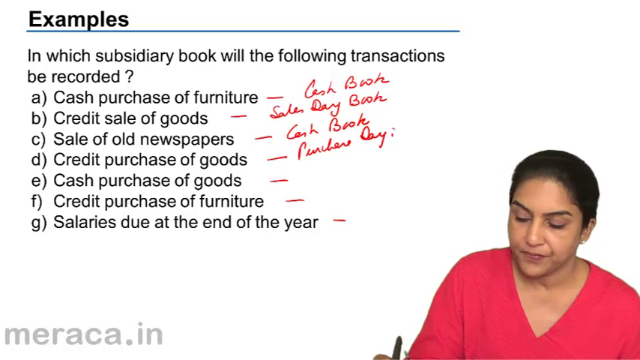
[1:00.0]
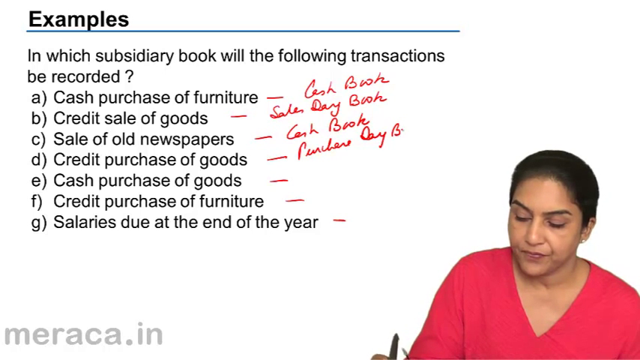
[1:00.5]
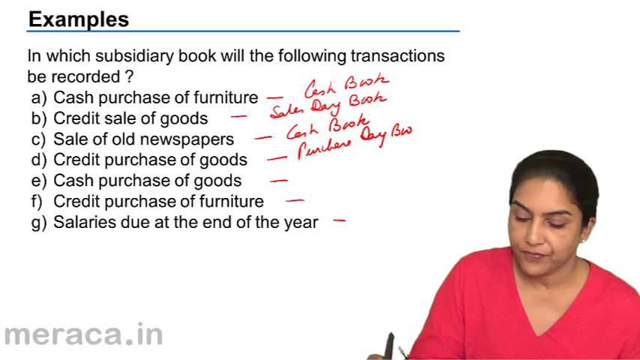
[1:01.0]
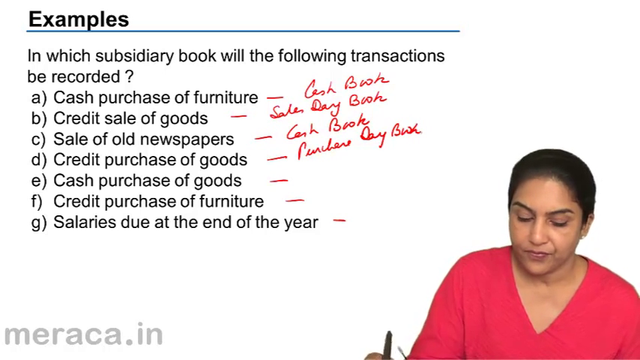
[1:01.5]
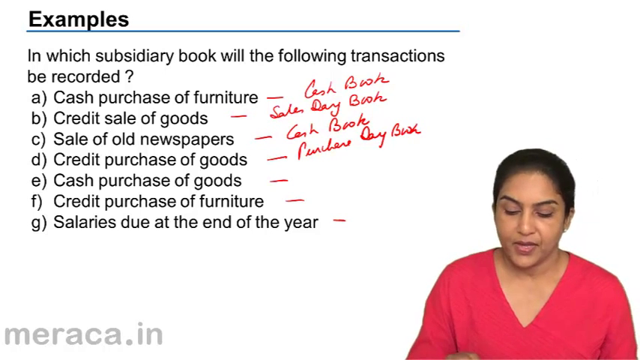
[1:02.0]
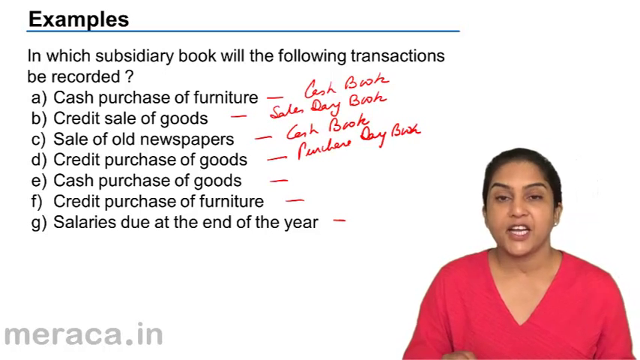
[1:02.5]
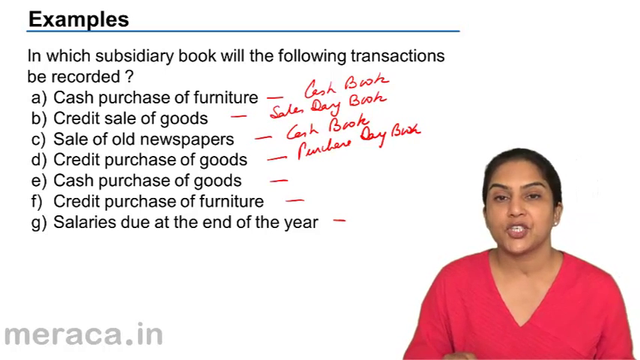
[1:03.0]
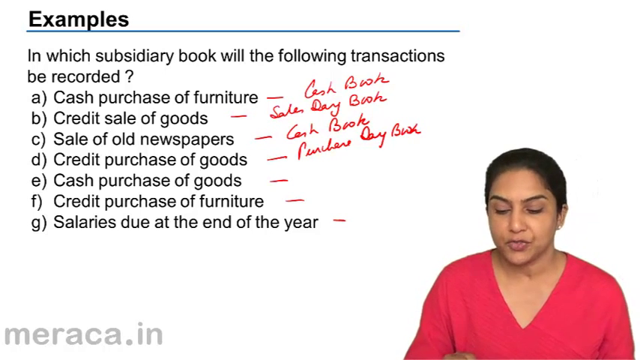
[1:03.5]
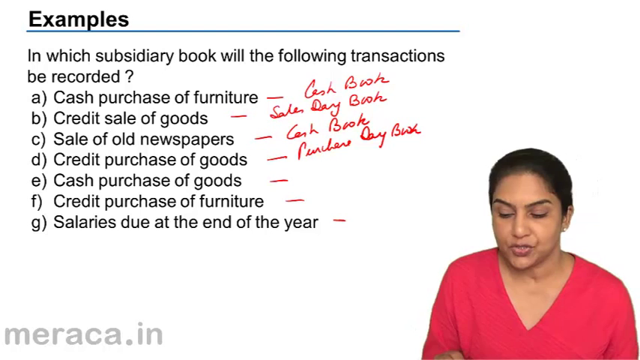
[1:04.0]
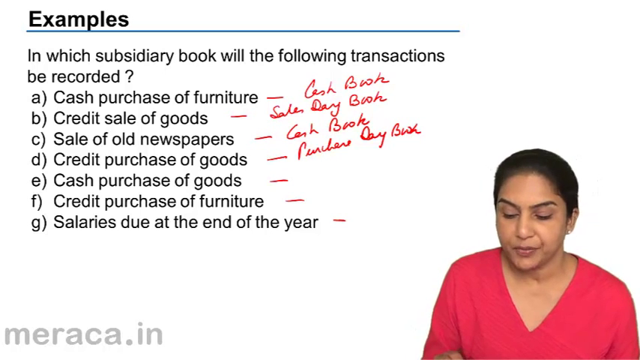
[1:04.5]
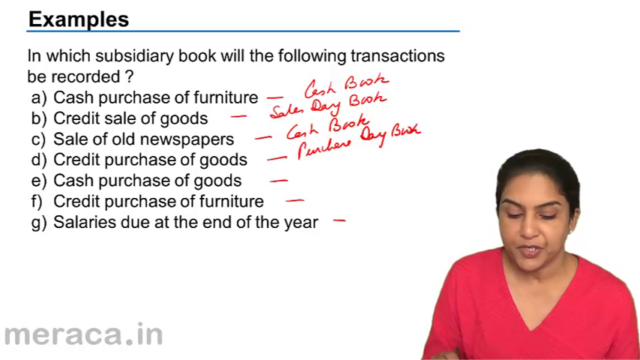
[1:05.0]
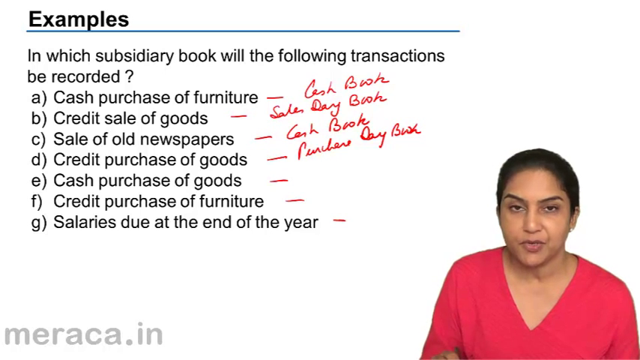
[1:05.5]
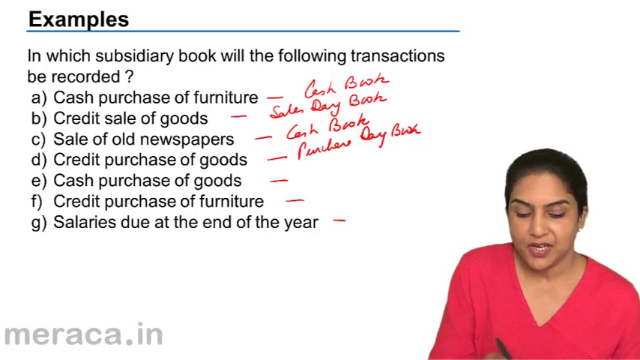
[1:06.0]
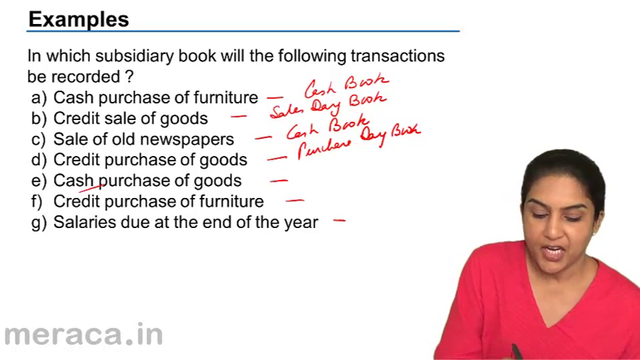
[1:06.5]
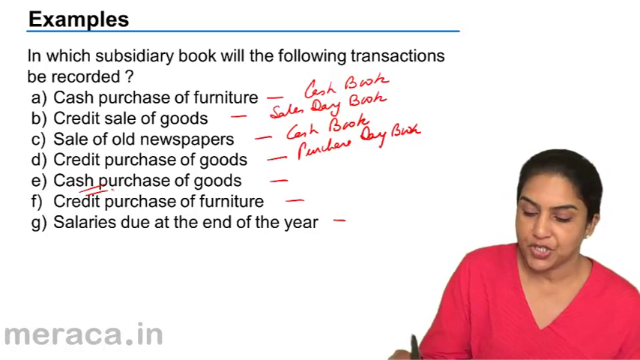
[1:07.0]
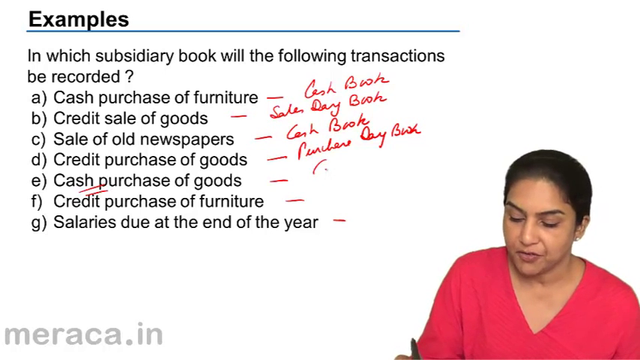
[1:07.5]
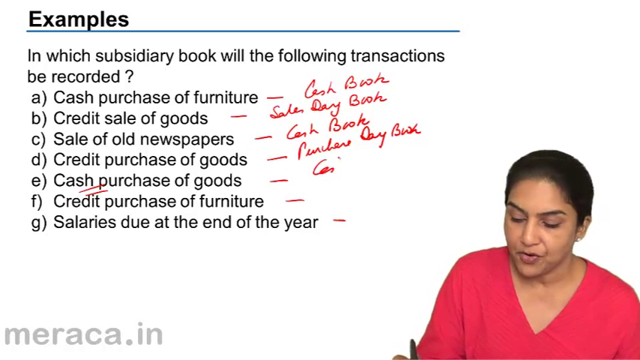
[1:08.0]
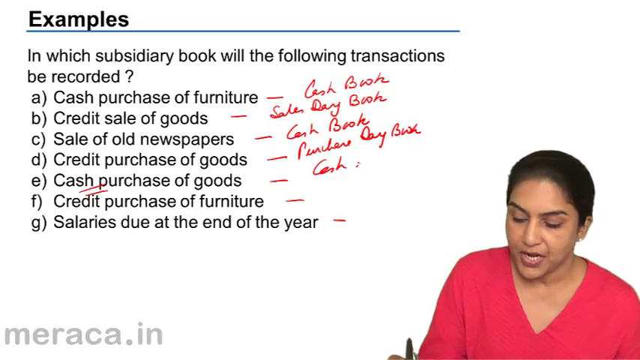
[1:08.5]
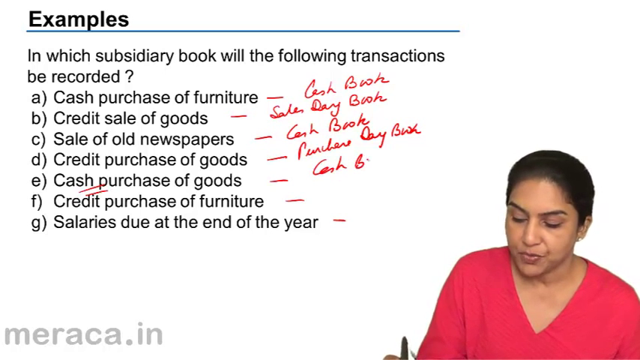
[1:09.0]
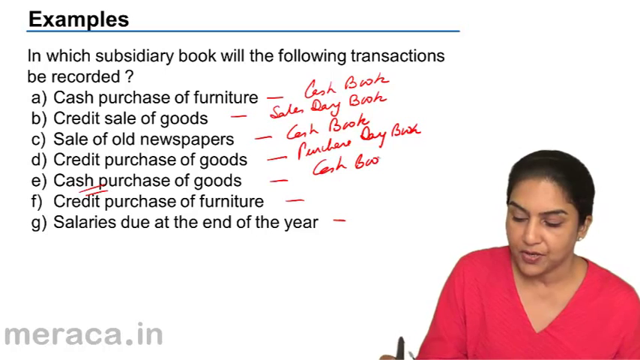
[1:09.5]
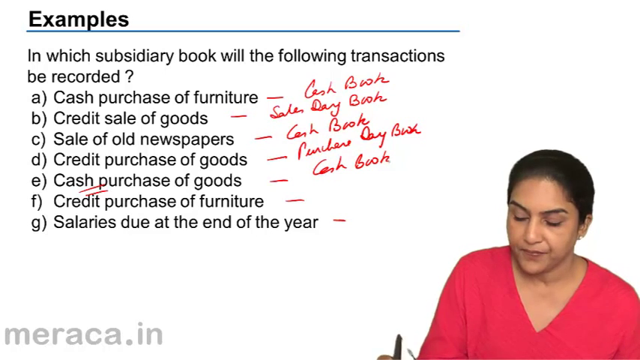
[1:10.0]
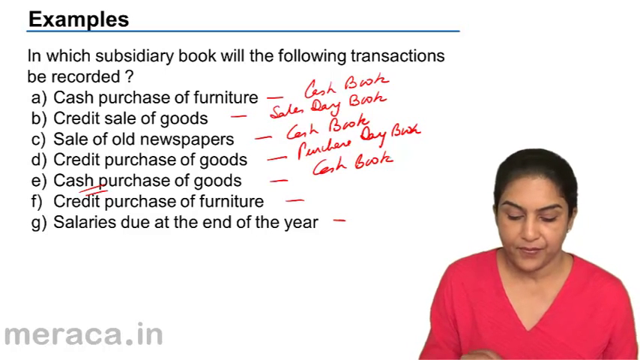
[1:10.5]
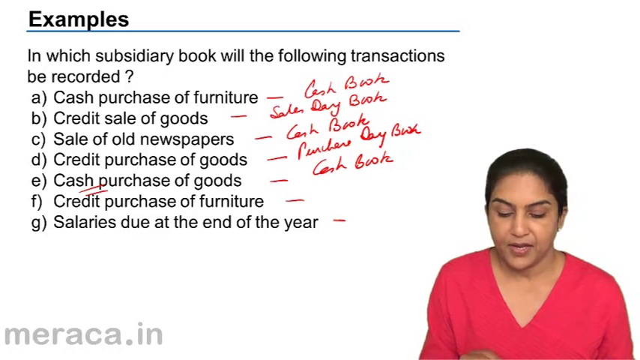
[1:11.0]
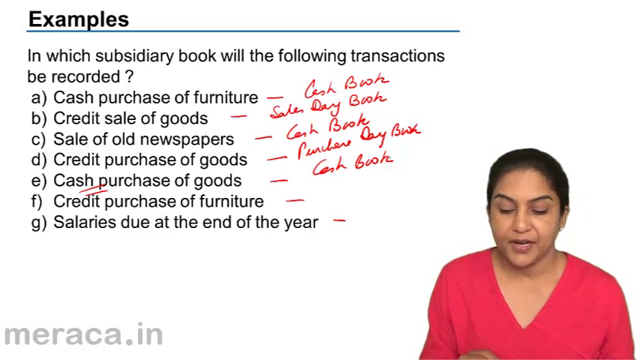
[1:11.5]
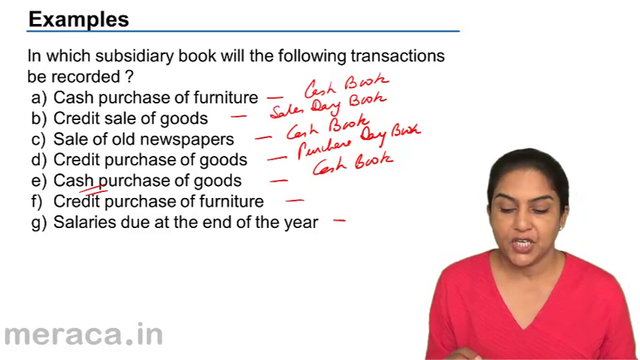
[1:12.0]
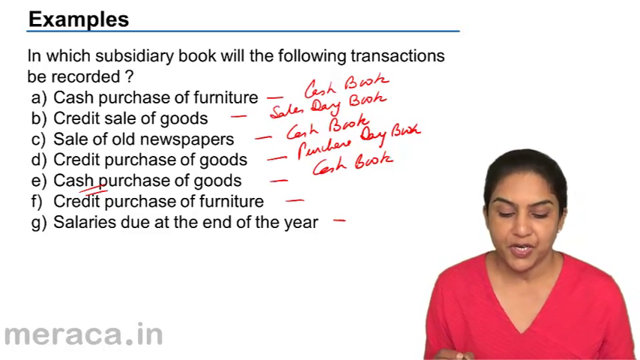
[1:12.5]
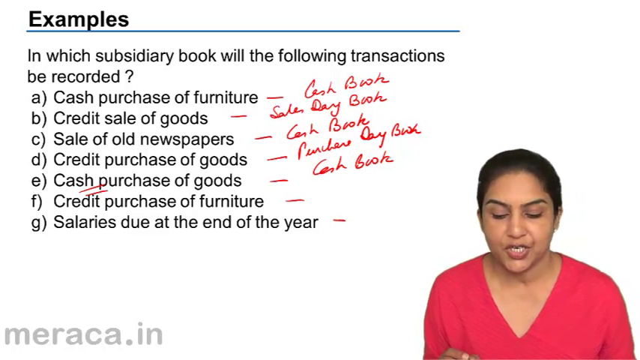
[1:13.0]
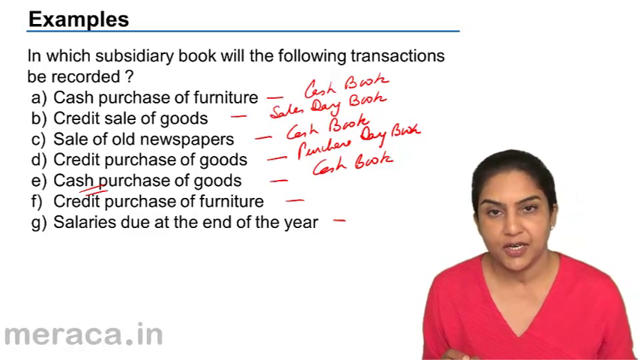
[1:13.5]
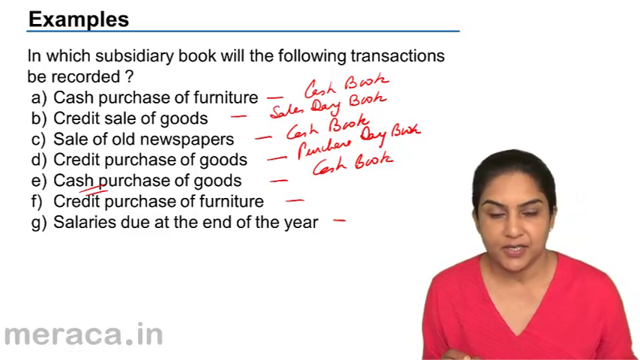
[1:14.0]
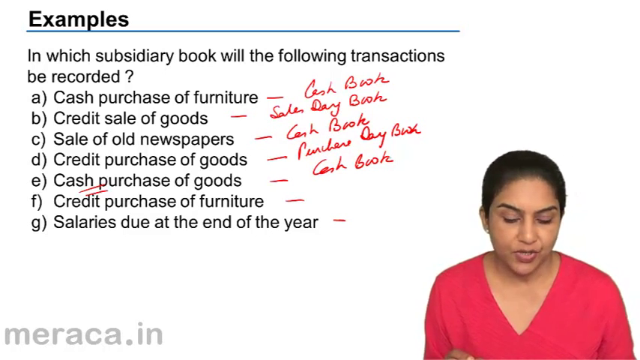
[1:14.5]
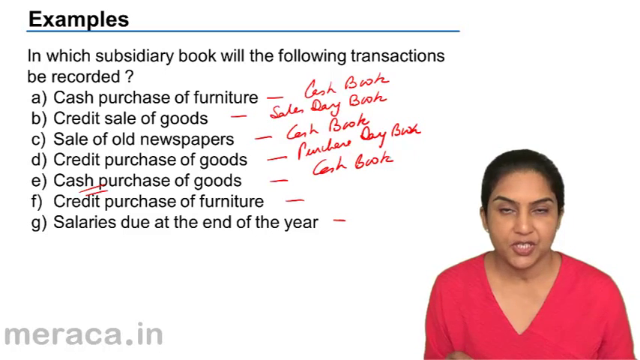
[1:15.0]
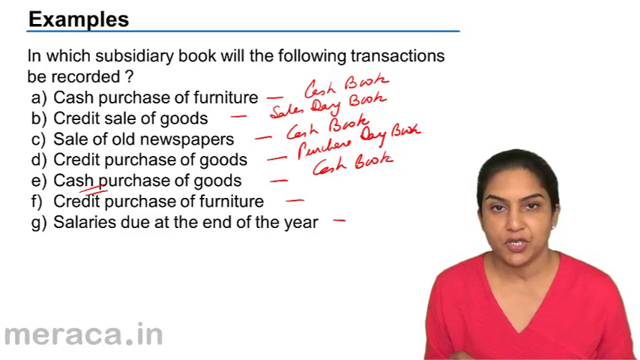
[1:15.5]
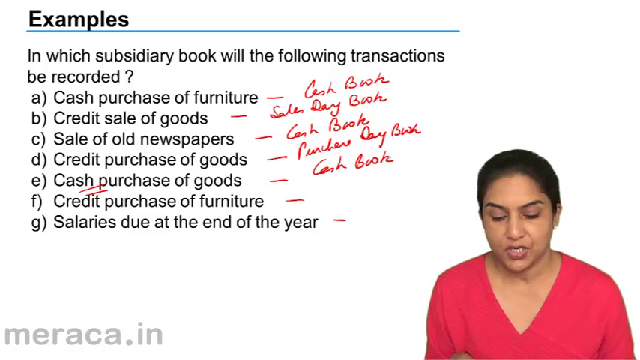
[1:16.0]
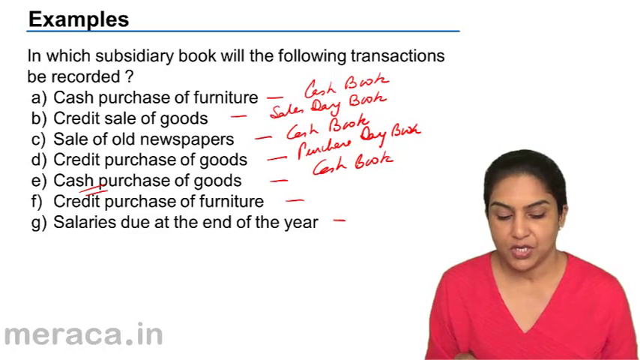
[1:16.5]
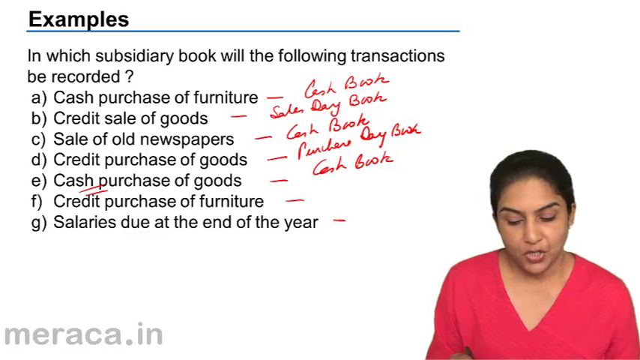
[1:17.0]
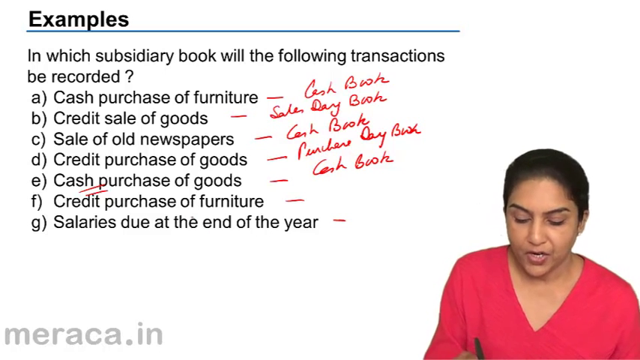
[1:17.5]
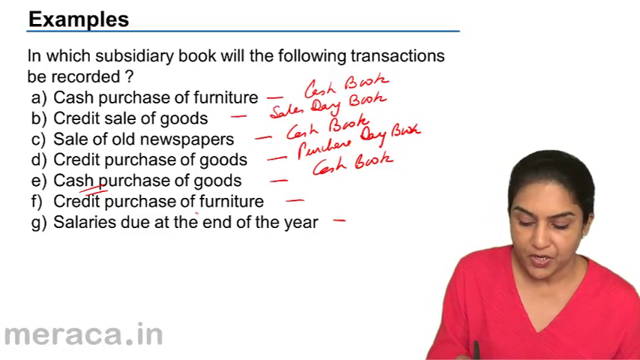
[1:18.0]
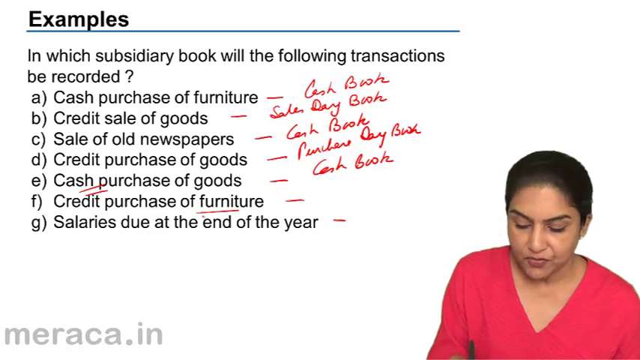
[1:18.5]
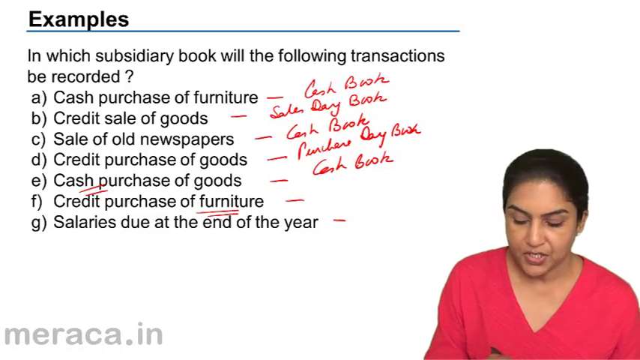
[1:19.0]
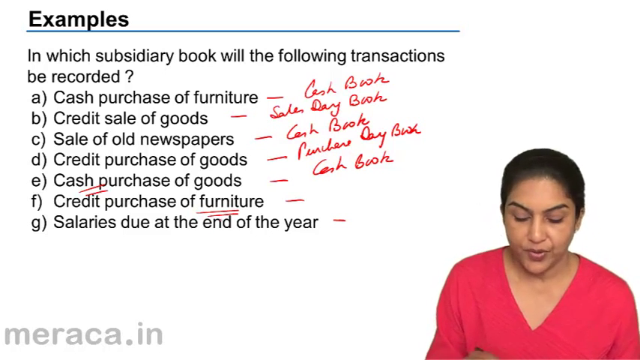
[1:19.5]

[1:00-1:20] For option D, credit purchase of goods, she writes "purchase day book". She then makes two small lines under "cash purchase" in option E and writes "cash book" after option E. She looks at the camera twice and down again, then underlines "furniture" in option F with two lines. Her handwriting now reads "cash book" for A, "sales day book" for B, "cash book" for C, "purchase day book" for D and "cash book" for E. The background and her behavior do not change much.